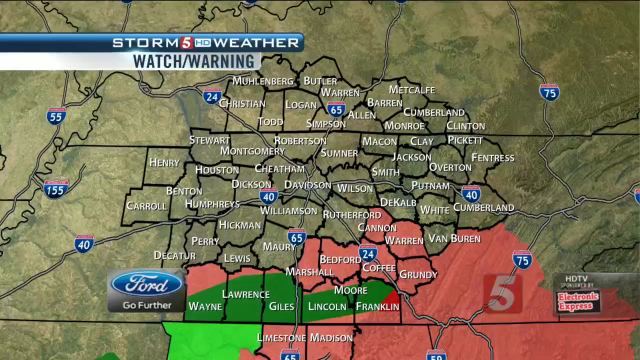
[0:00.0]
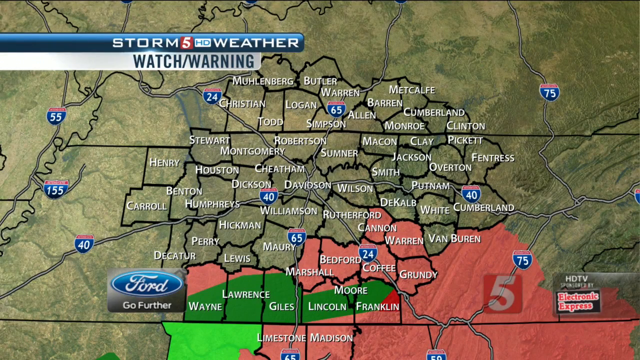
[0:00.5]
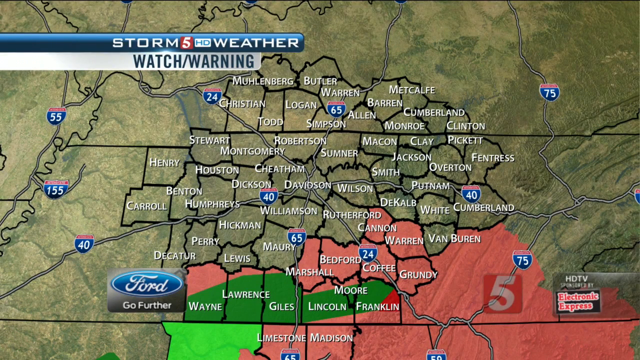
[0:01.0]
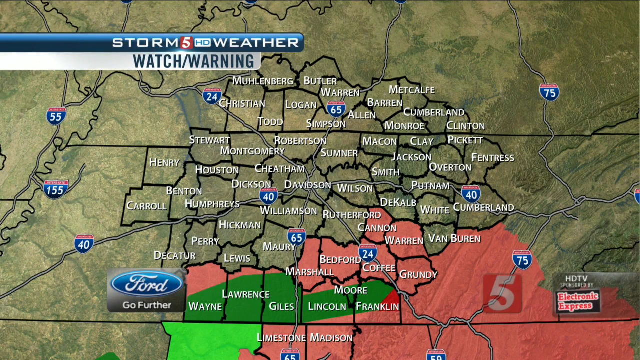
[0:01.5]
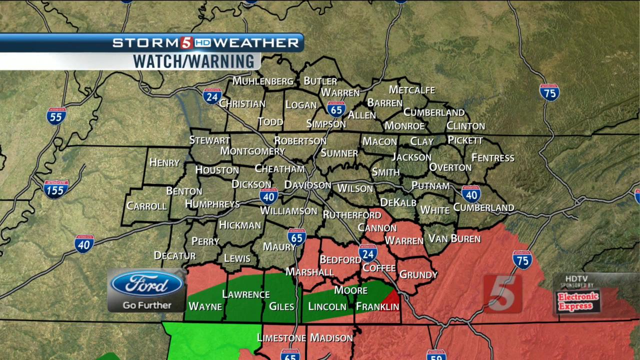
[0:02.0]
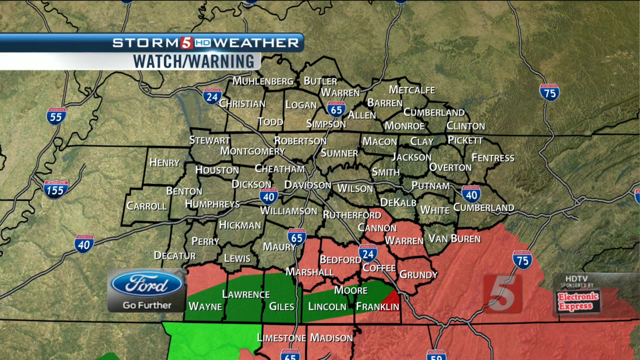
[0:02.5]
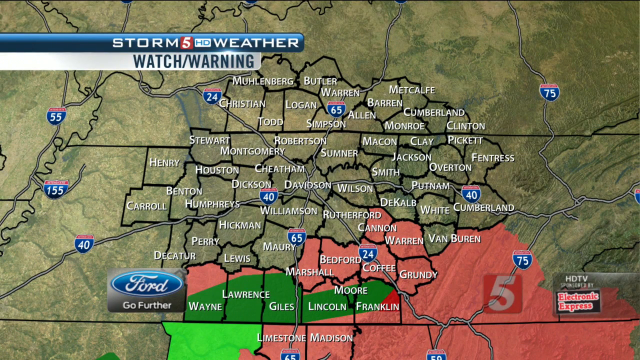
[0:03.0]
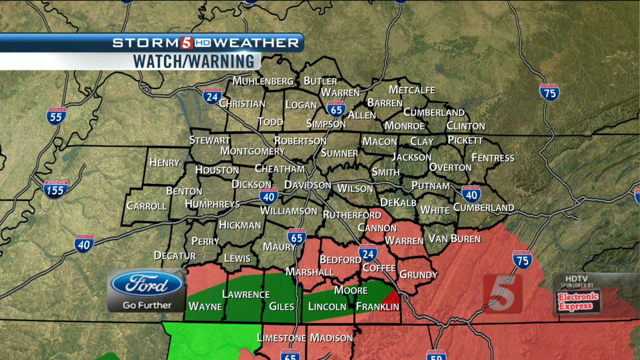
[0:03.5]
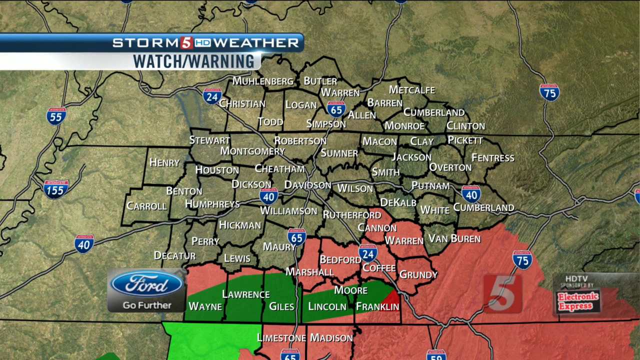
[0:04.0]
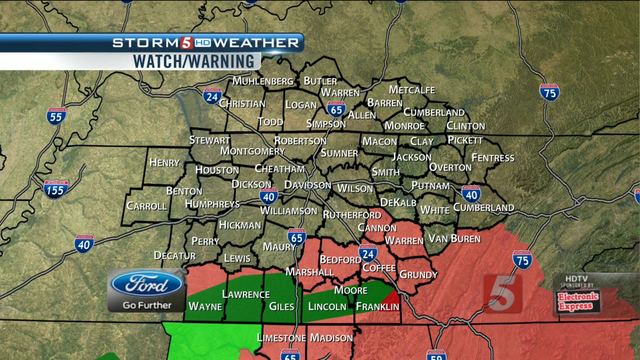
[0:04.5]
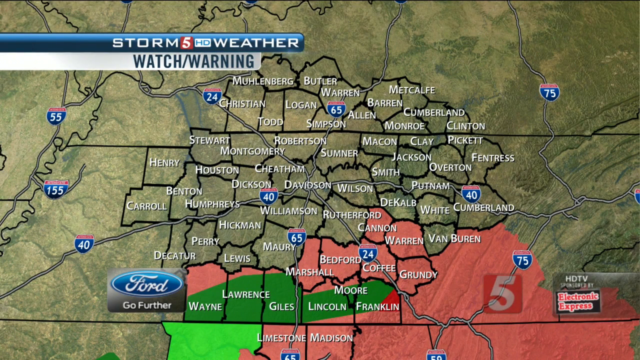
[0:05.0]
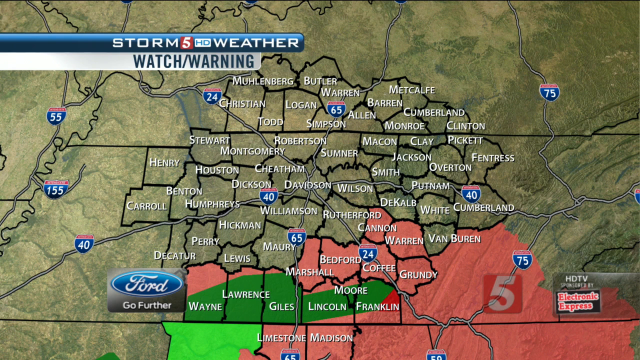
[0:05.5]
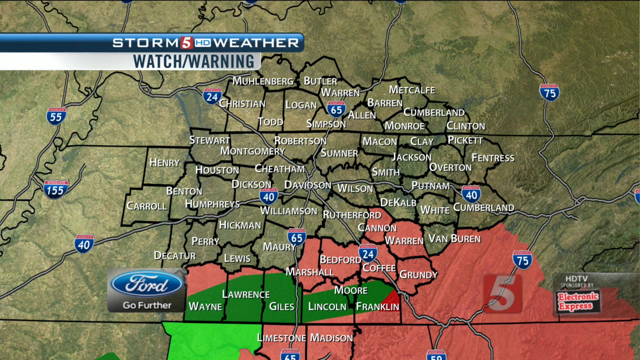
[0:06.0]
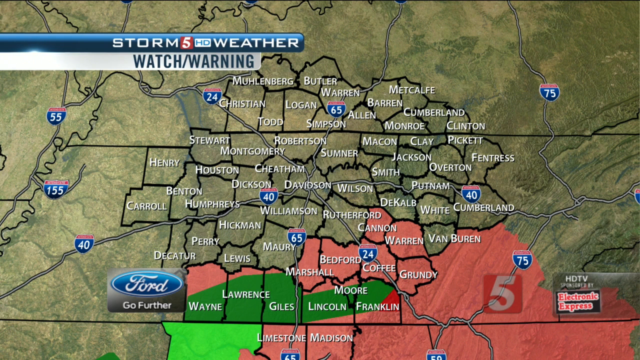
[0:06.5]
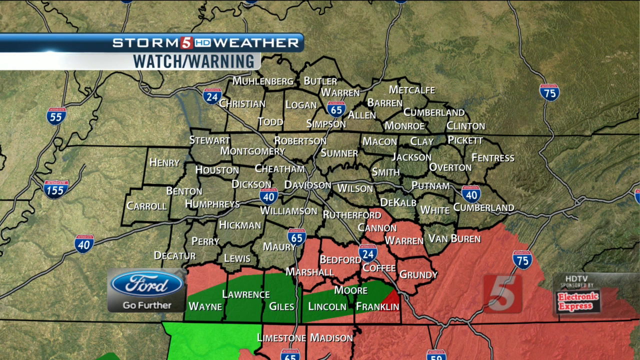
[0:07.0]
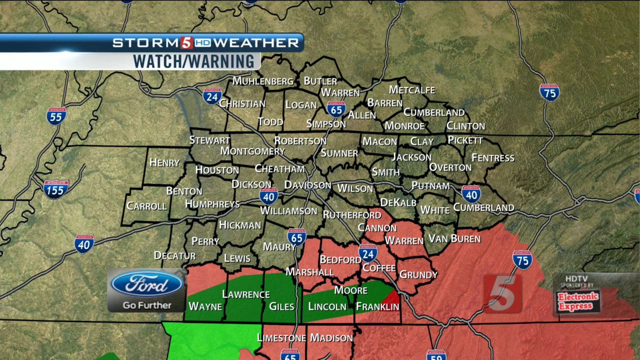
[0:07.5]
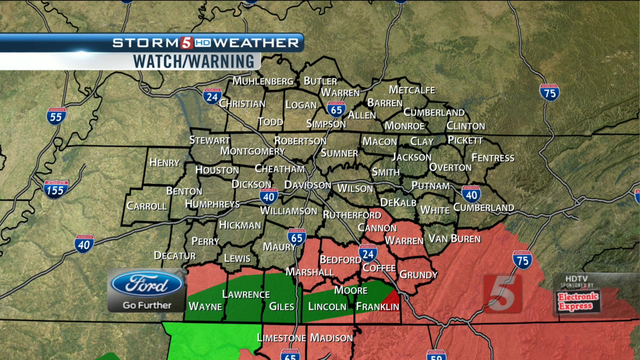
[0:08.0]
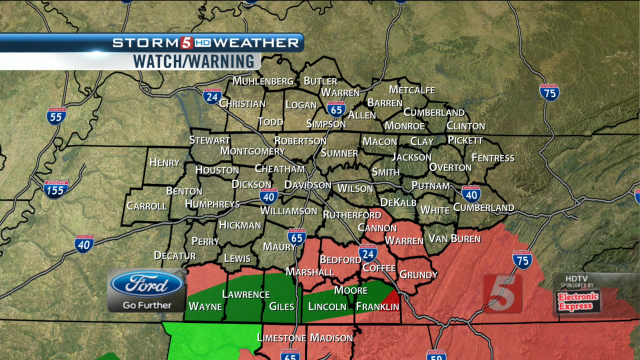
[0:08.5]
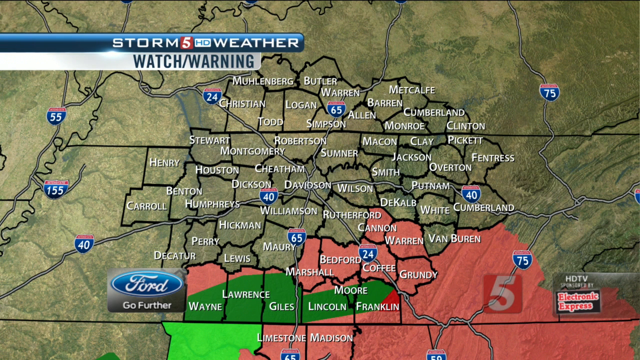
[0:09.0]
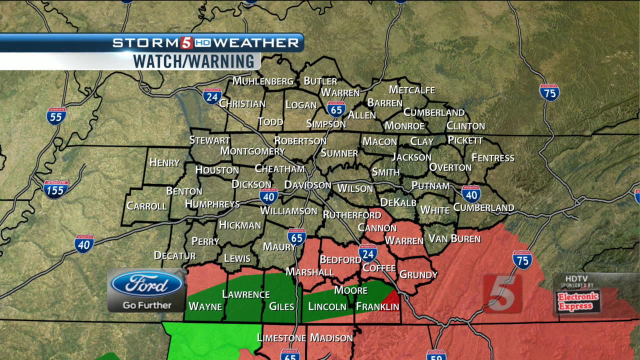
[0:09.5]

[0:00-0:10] A map is shown in different colors, including pink, a light green like grass, and dark green, with what appear to be place names on it. At the top is a blue highlight with the text "storms five weather", and under it "watch and warnings" is written in blue on a white background. The report is sponsored by Ford, along with the slogan "Go Further".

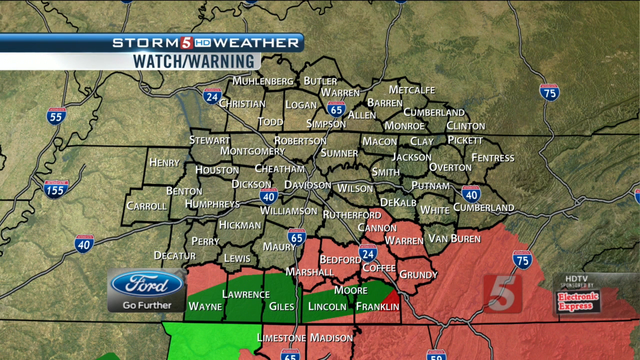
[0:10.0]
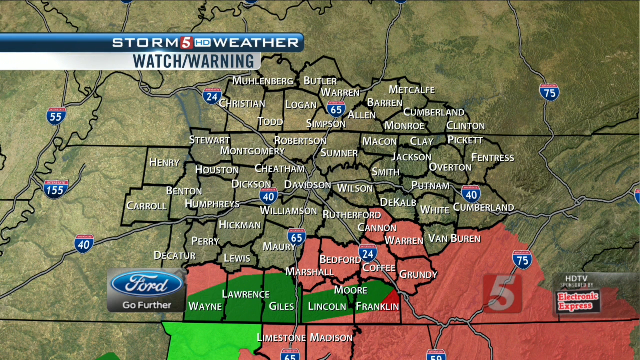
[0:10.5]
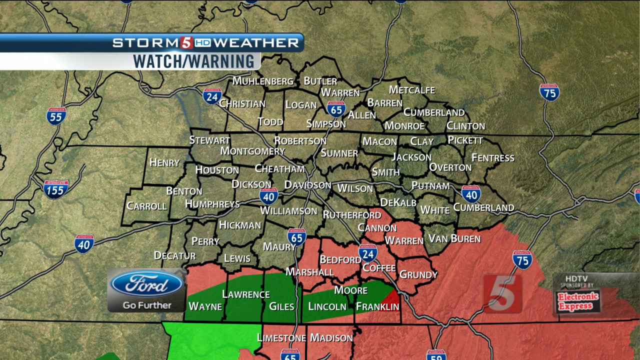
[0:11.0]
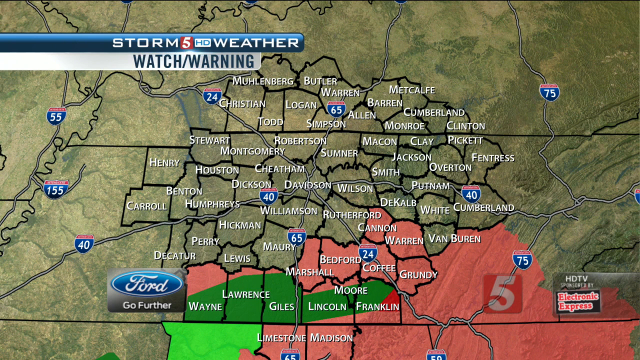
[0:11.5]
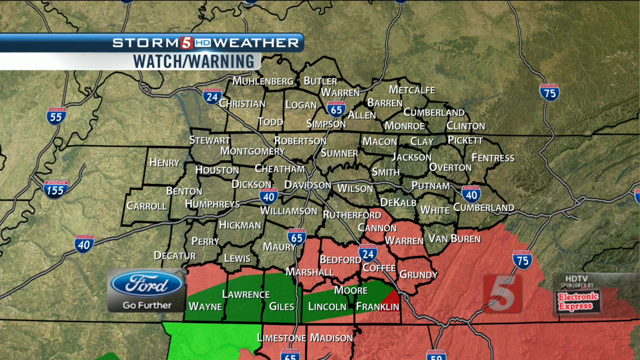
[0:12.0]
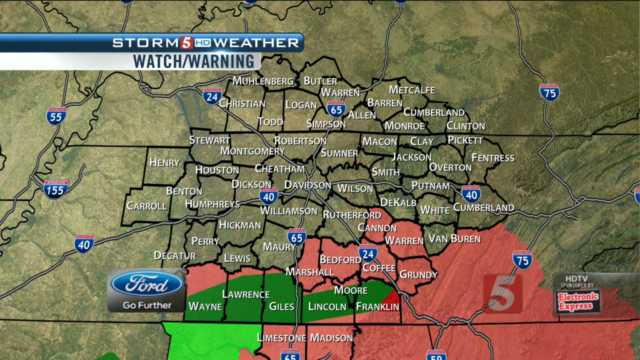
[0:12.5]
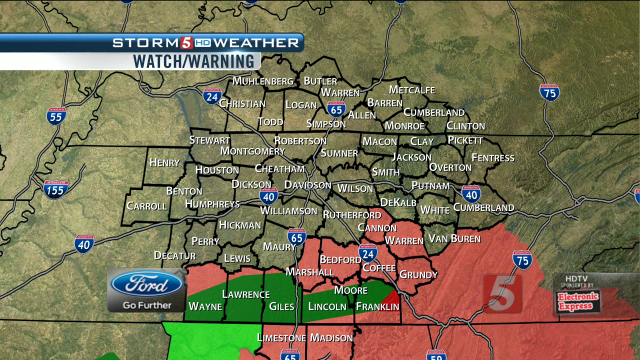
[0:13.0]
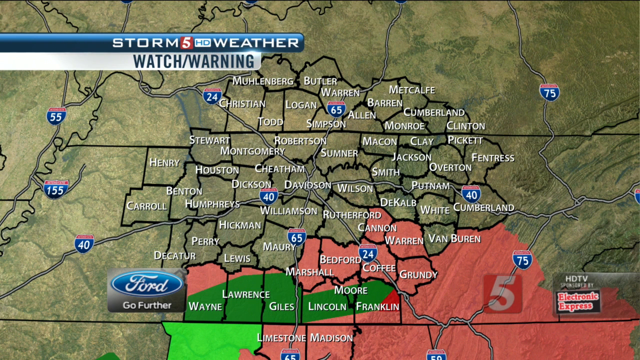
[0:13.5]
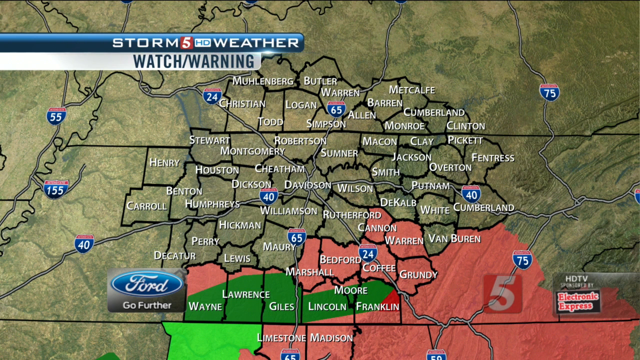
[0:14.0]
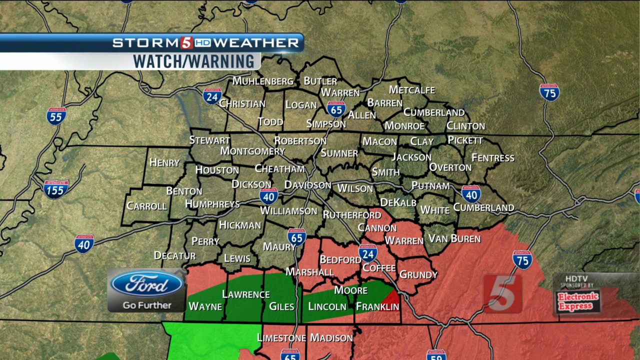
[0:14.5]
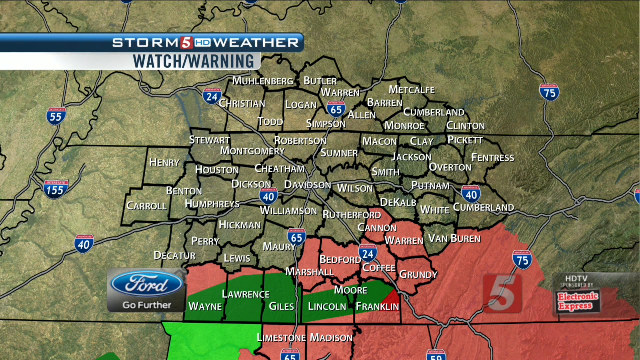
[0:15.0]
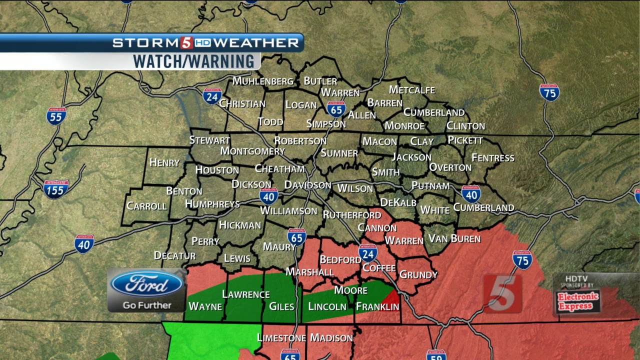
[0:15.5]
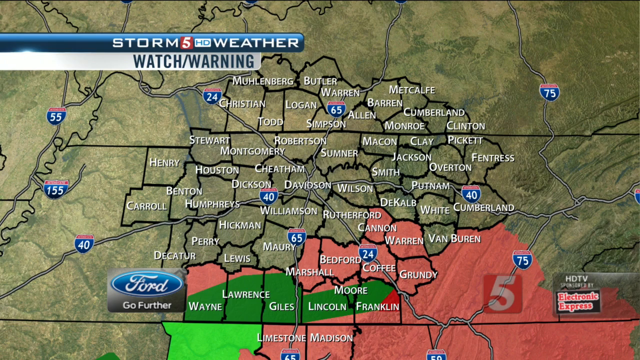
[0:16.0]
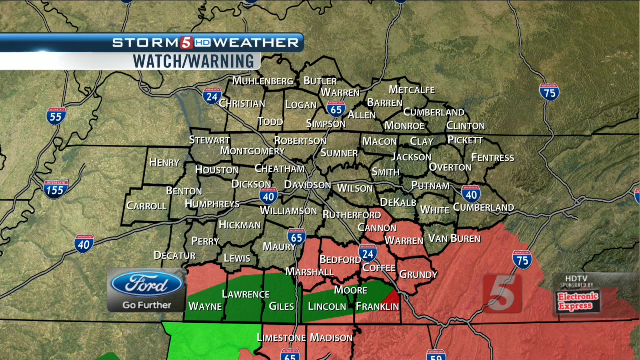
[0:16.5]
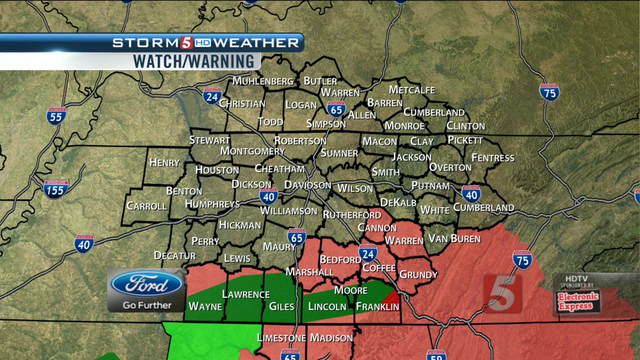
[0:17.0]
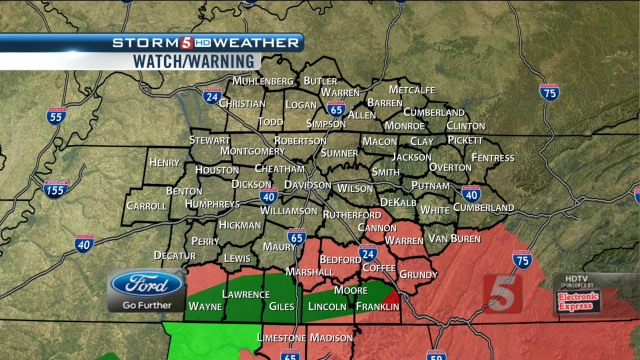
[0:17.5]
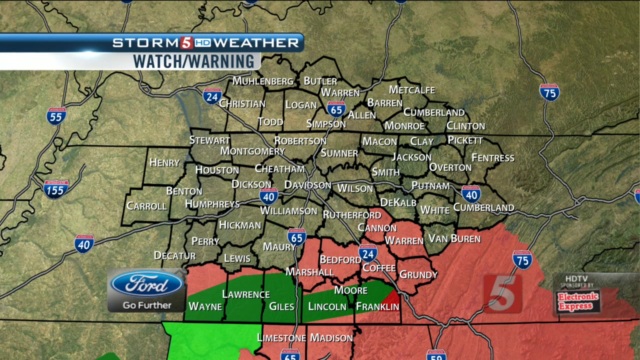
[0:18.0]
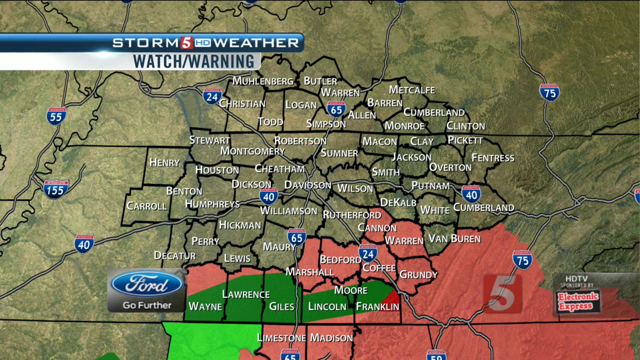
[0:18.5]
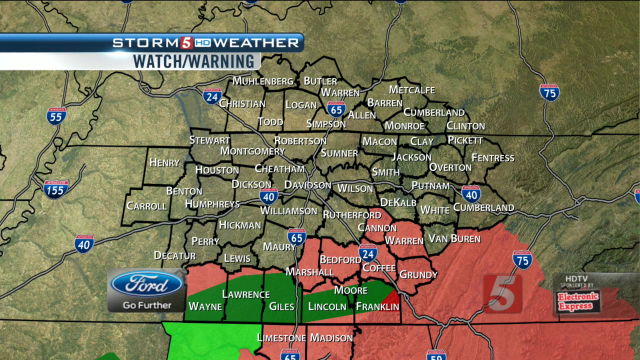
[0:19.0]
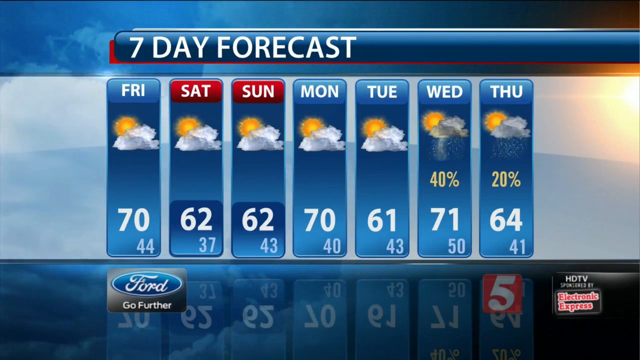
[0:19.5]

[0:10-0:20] At the top, the text "storm five hd weather" appears in white letters on a blue background, with "watch or warning" below it in blue on a white background. There is something that looks like a weather map with many places on it, highlighted in pink, light green and dark green. The weather service is shown as sponsored by Ford. A seven-day forecast appears briefly and disappears quickly, giving an estimate of the weather from Monday to Sunday.